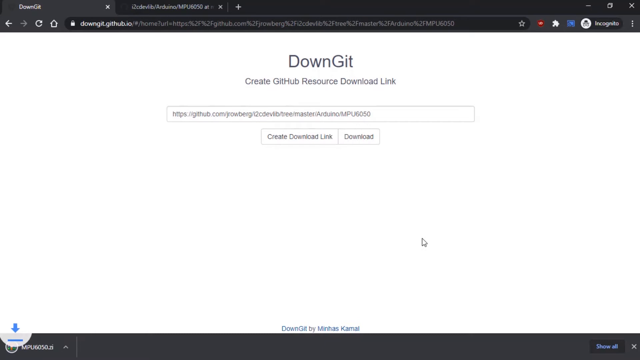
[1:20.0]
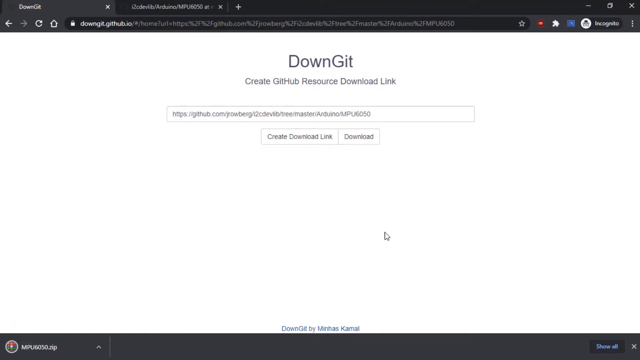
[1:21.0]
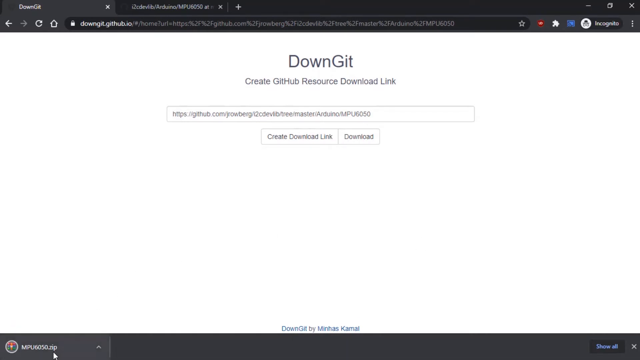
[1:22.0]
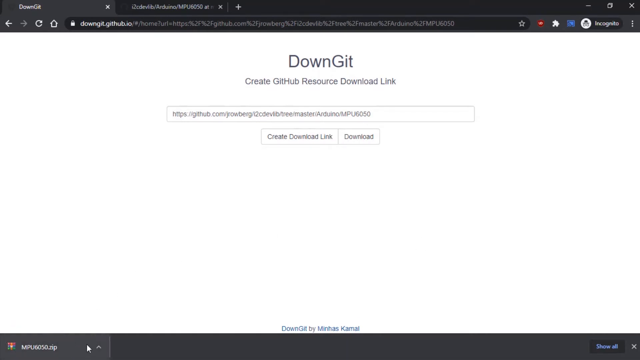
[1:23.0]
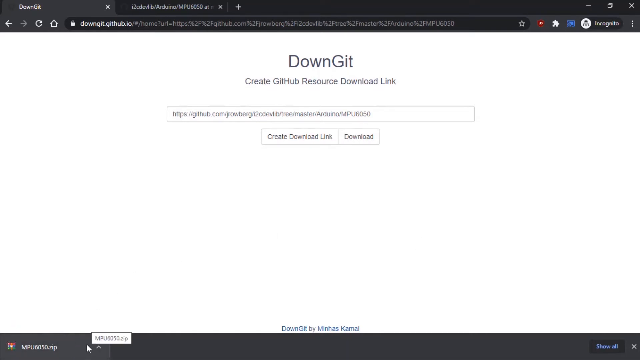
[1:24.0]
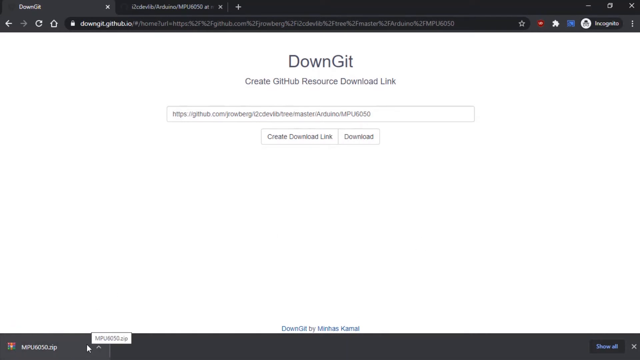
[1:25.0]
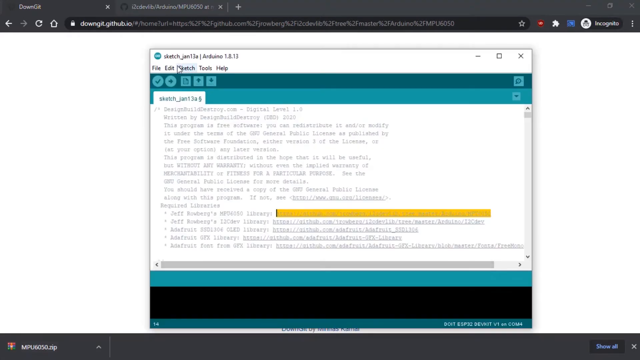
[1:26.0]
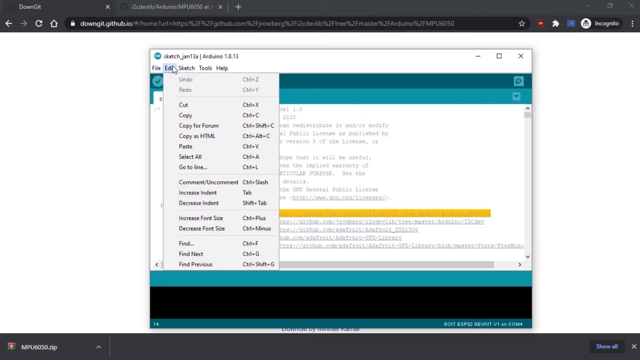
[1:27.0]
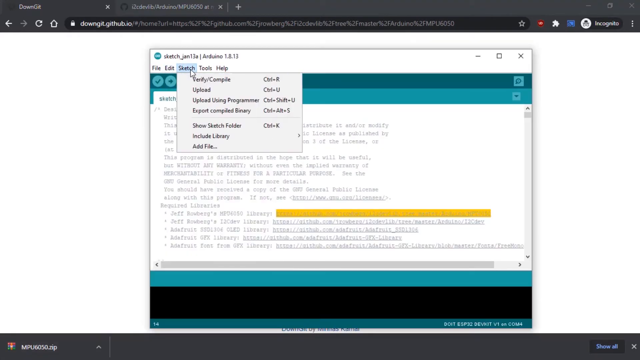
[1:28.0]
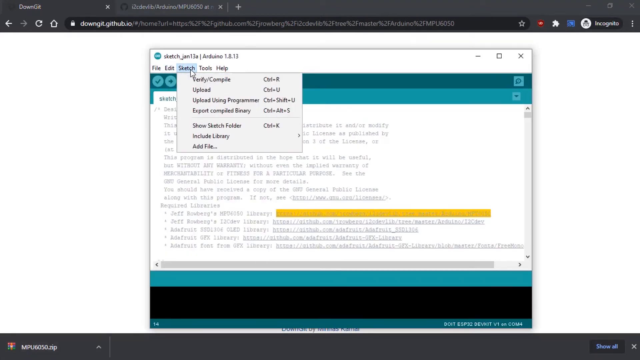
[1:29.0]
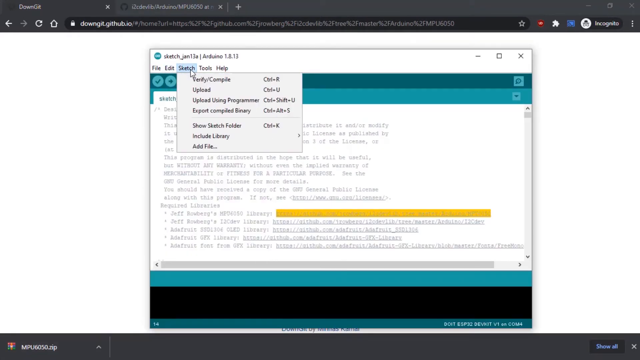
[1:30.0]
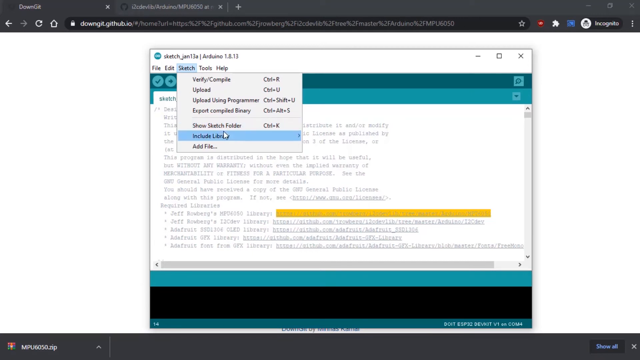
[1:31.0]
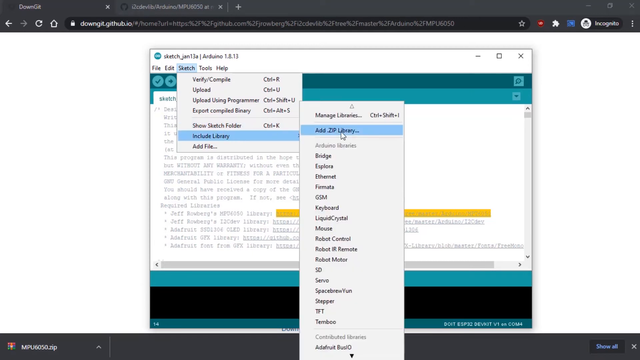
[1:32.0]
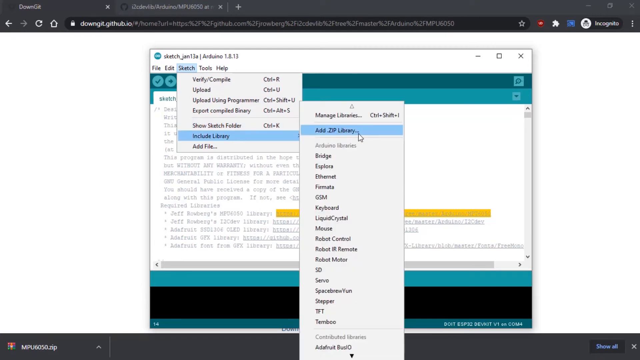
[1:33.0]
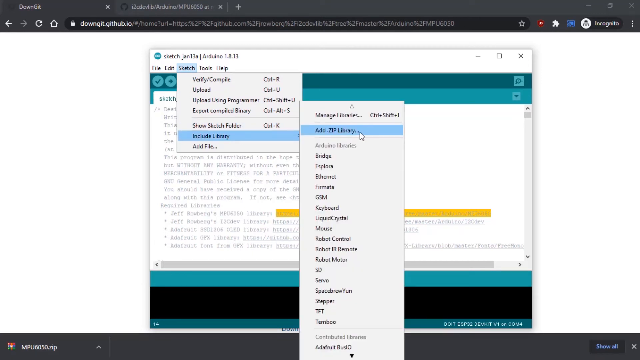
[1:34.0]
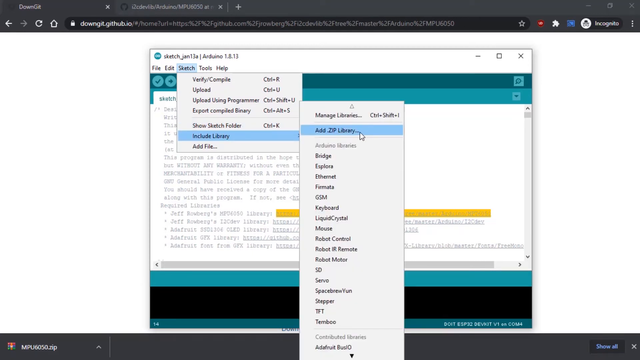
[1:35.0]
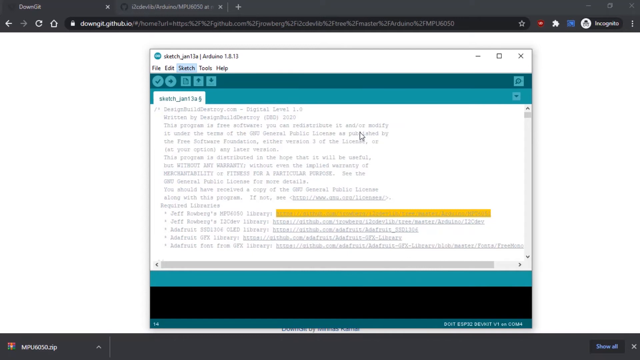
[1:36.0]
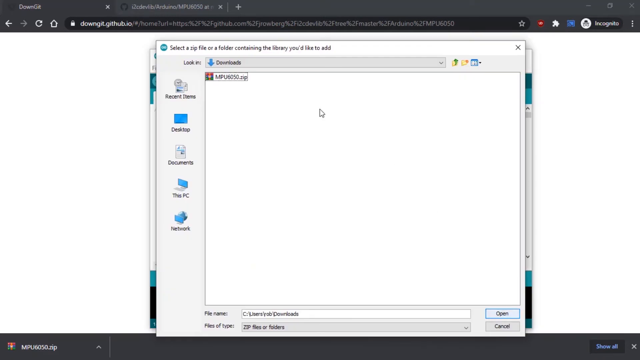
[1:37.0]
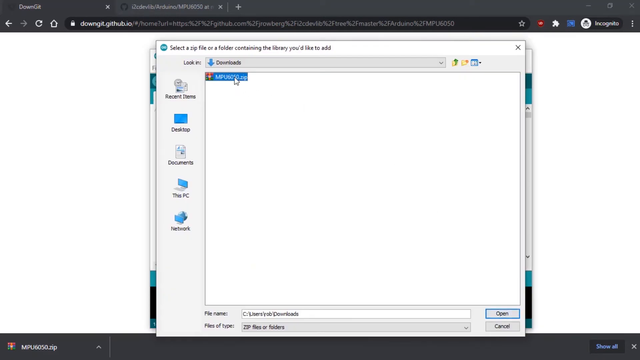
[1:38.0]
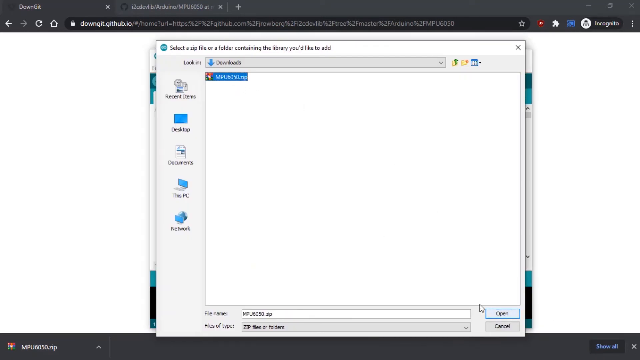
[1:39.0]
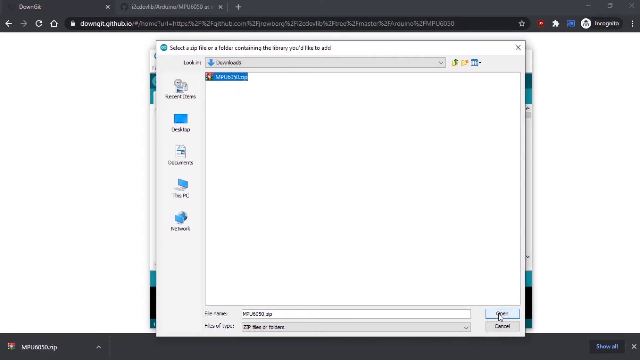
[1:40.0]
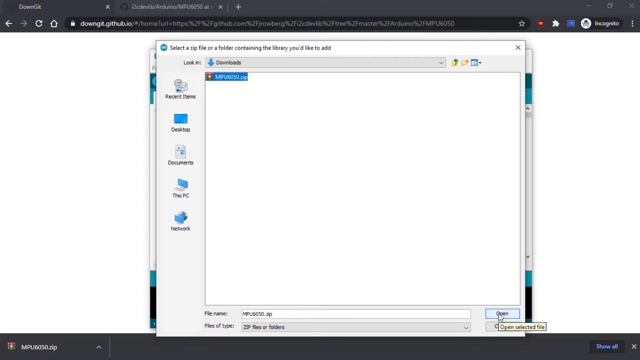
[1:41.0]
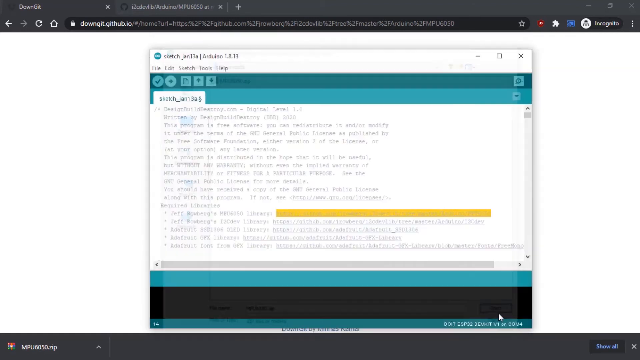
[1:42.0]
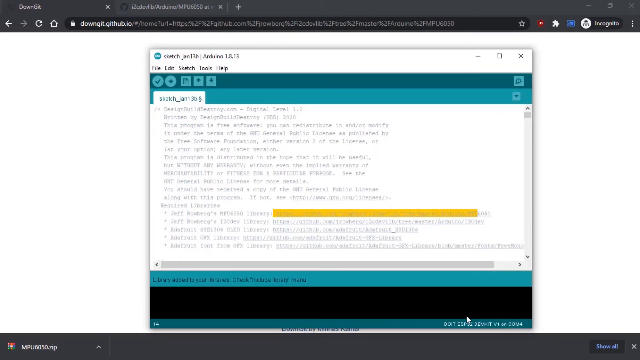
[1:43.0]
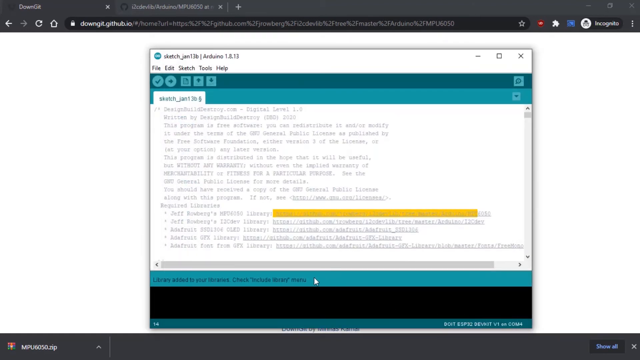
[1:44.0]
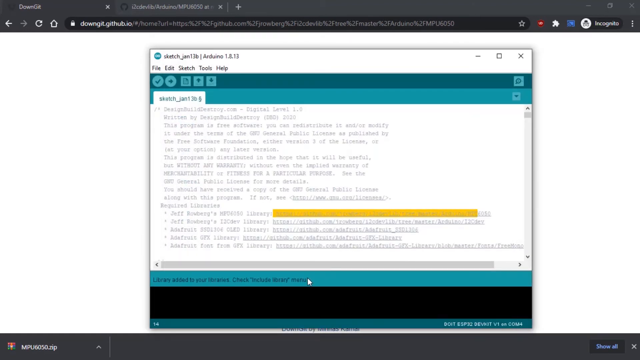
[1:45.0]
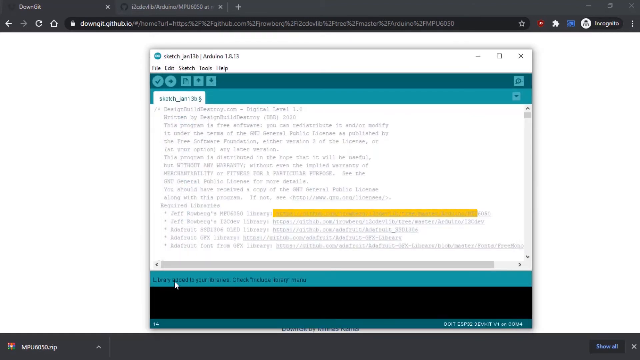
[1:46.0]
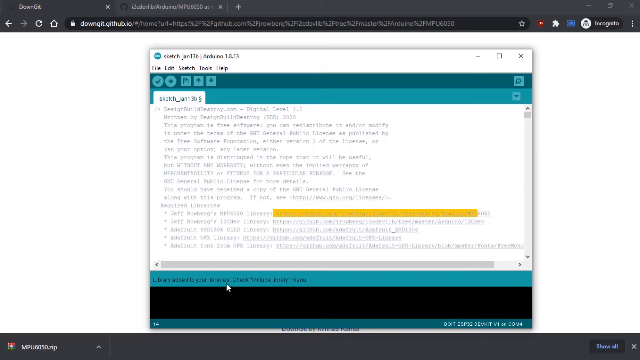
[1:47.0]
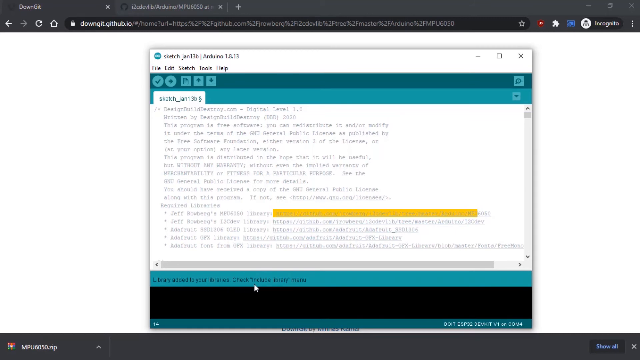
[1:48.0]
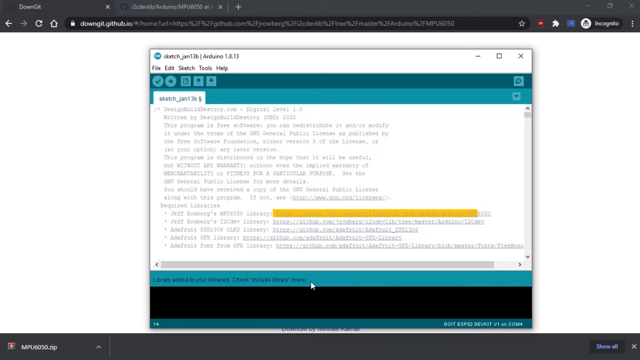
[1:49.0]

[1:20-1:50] A recording of a computer screen shows an internet browser with two tabs, the first one selected. The first tab has a limited amount of information on it and is for creating a GitHub resource download link; a GitHub web link has been entered into its input box. The user then opens the Arduino application window, moves the cursor to the header menu and selects the second option along, Edit, which opens a drop-down menu. They move along to the next header option, Sketch, opening another drop-down menu, and go down to the sixth option, Include Libraries, which is highlighted in blue and opens a new drop-down on the right-hand side. They select the second option down, Add Zip Library, which is highlighted in blue. A File Explorer window opens in the Downloads folder, where they select a zip file and click the Open button. The user moves the cursor across the Arduino application window, hovering it over a notification that says "library added to your libraries".